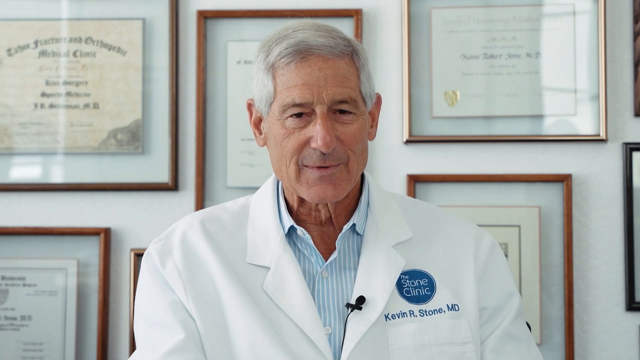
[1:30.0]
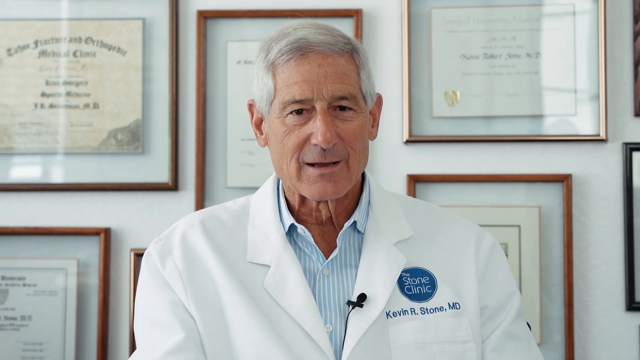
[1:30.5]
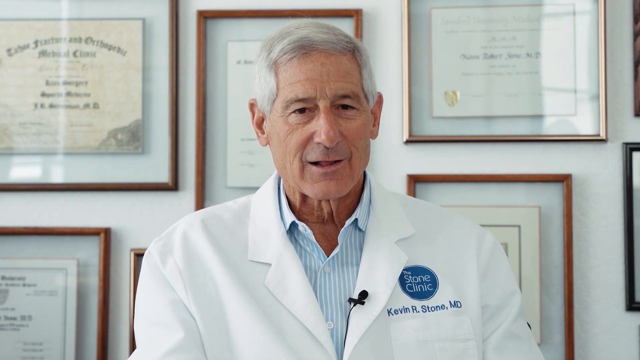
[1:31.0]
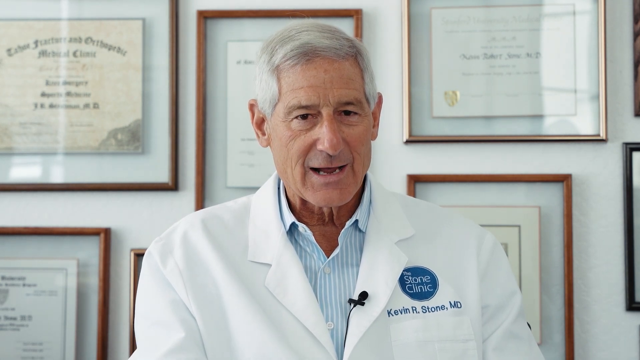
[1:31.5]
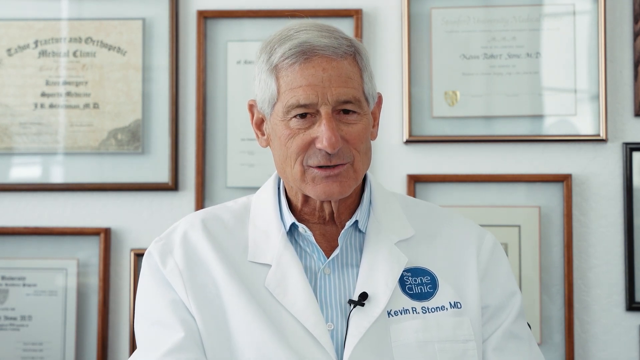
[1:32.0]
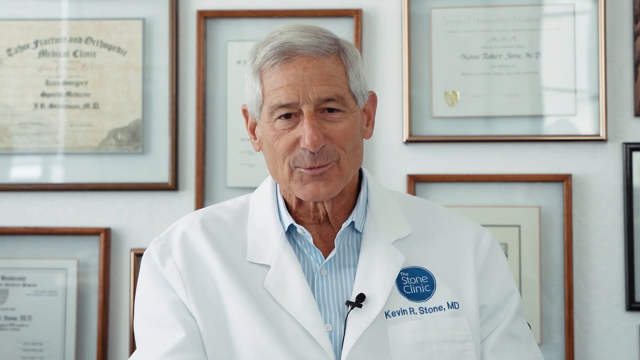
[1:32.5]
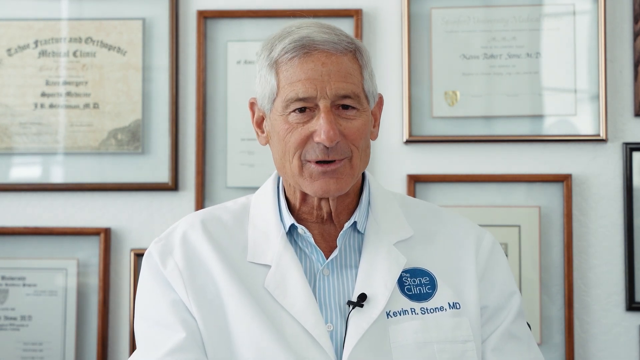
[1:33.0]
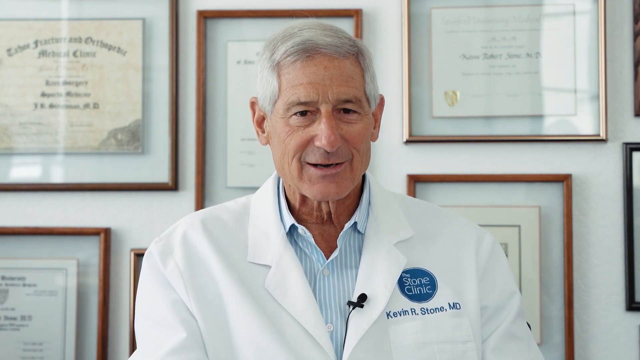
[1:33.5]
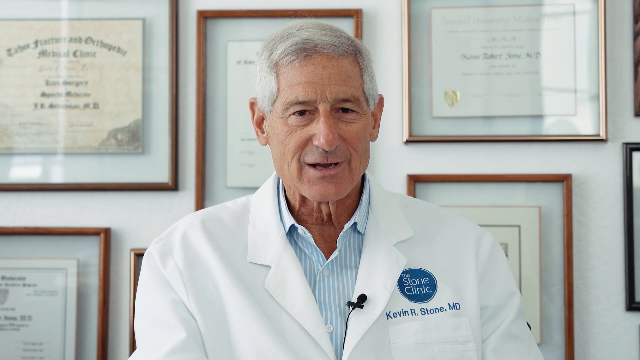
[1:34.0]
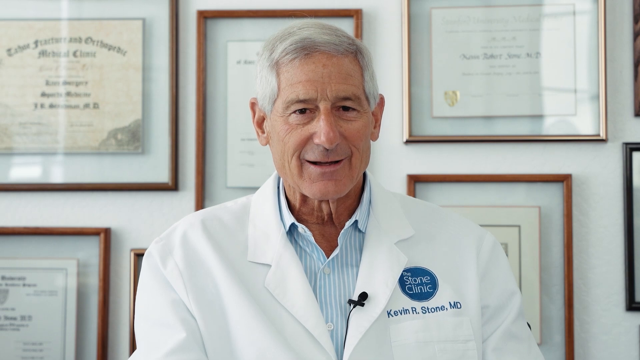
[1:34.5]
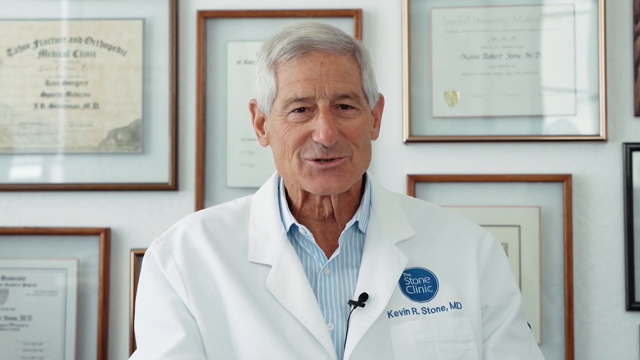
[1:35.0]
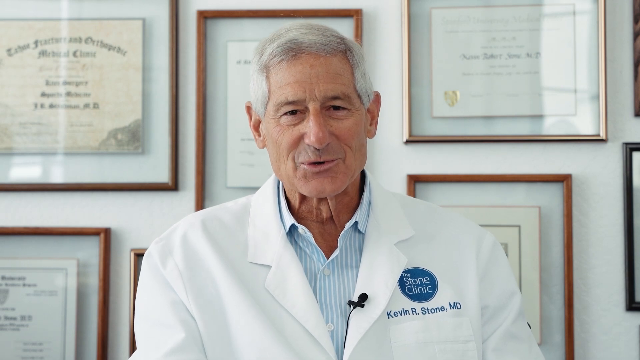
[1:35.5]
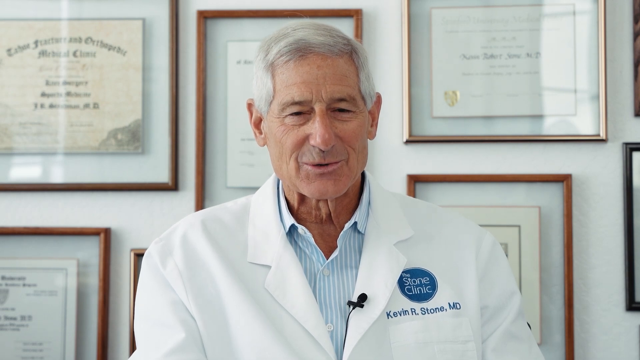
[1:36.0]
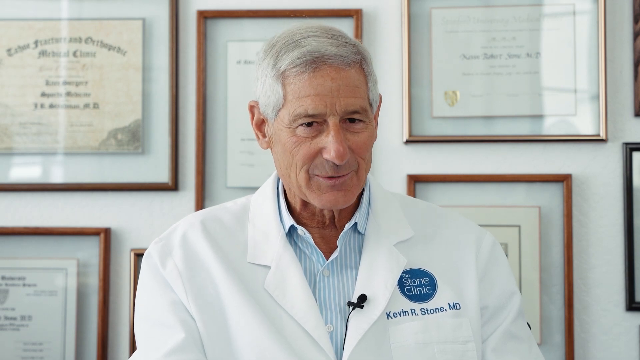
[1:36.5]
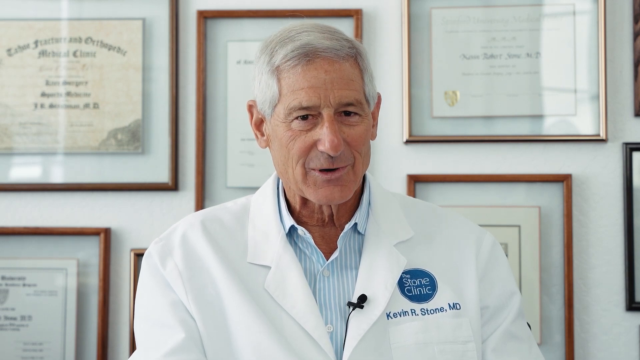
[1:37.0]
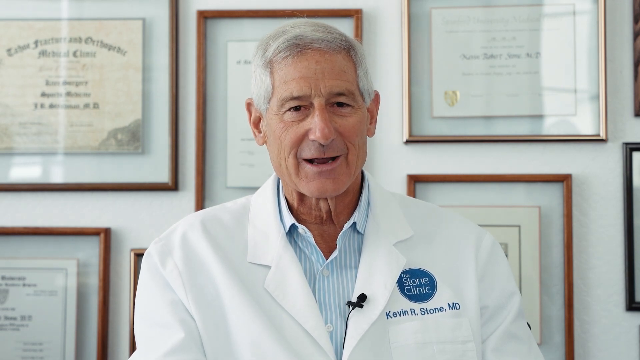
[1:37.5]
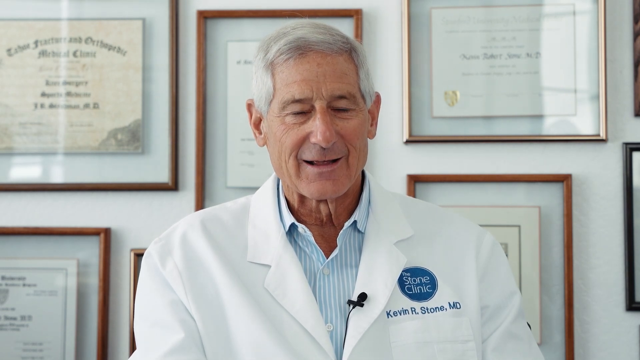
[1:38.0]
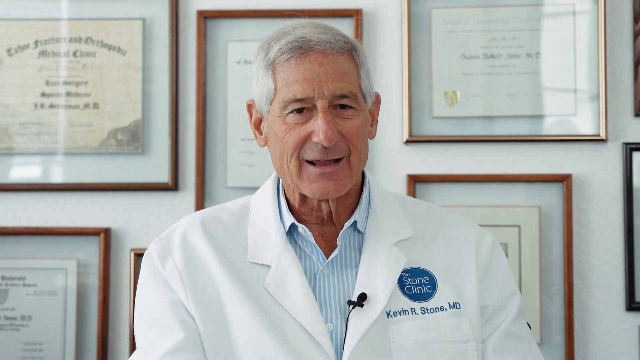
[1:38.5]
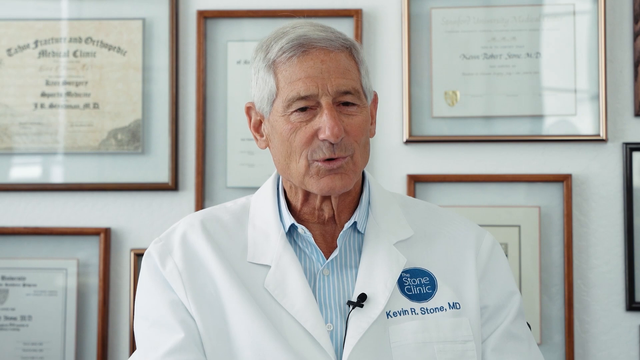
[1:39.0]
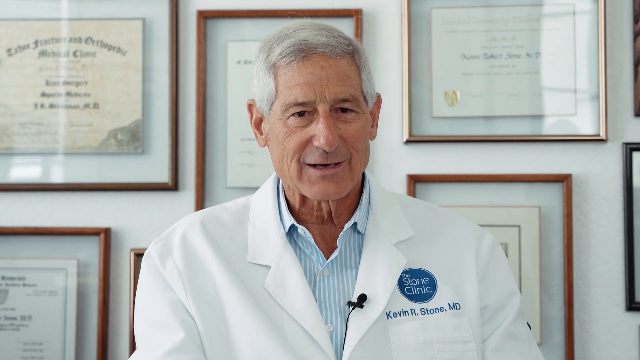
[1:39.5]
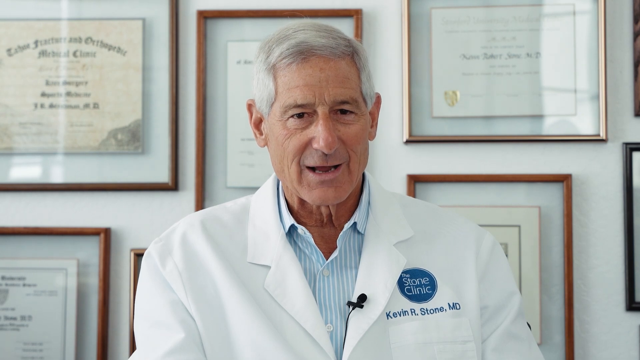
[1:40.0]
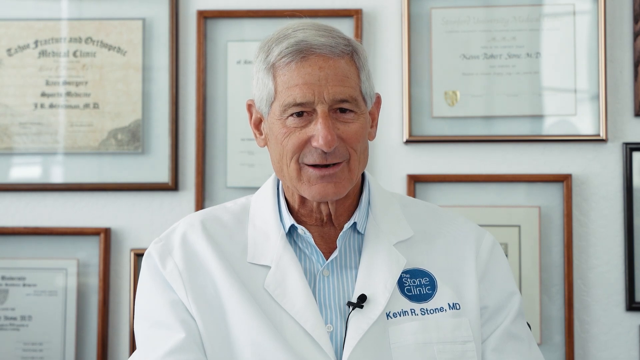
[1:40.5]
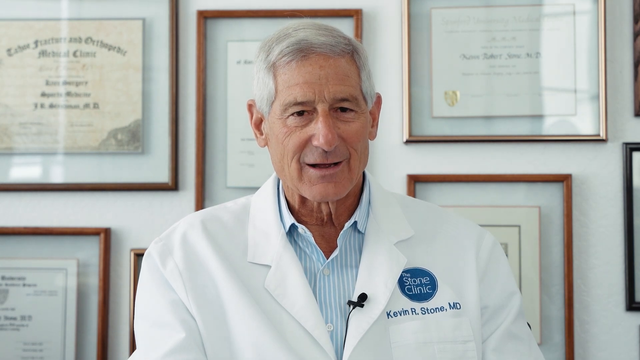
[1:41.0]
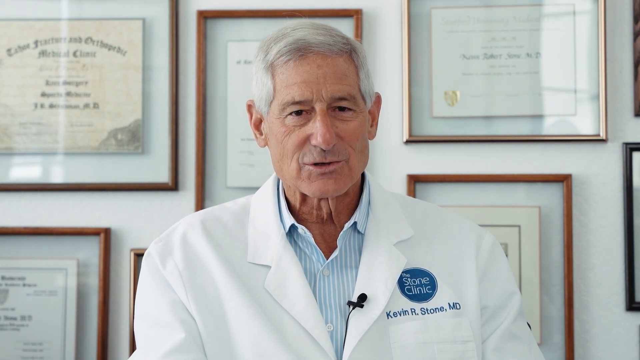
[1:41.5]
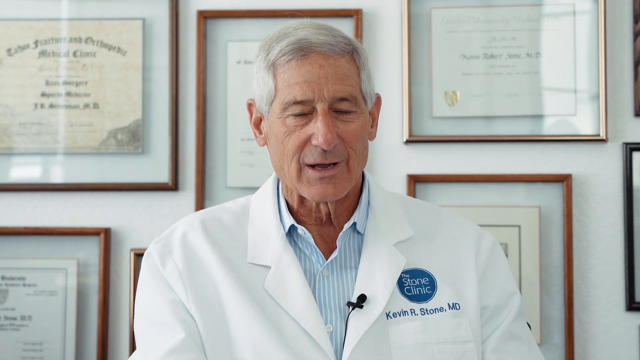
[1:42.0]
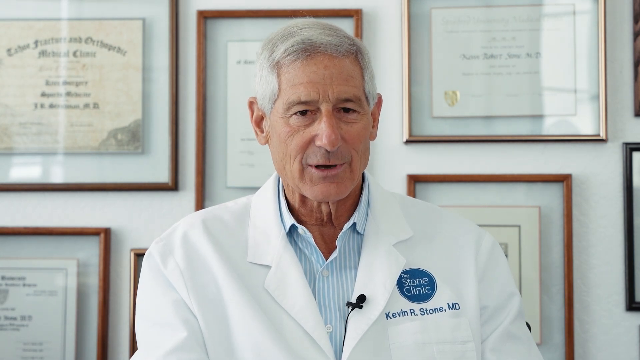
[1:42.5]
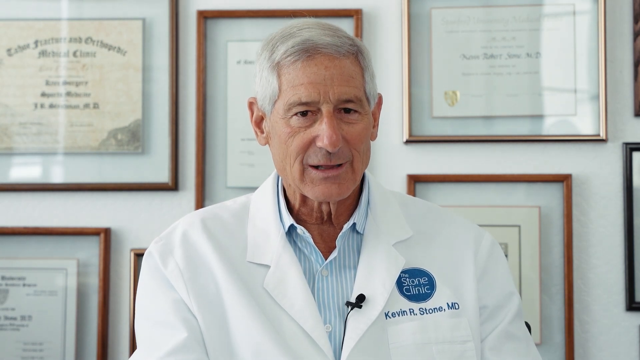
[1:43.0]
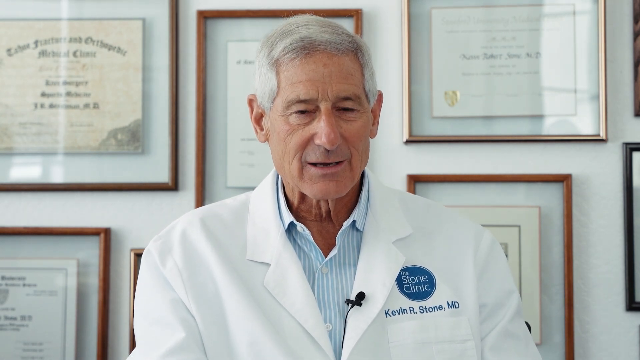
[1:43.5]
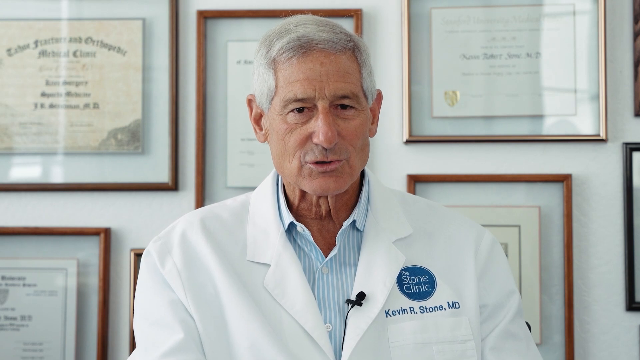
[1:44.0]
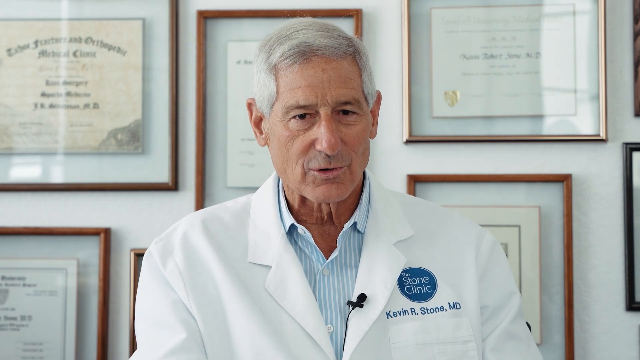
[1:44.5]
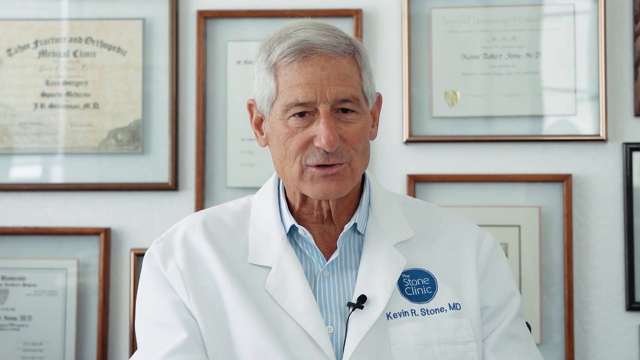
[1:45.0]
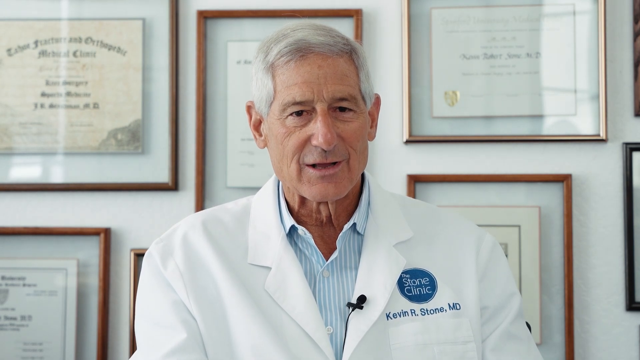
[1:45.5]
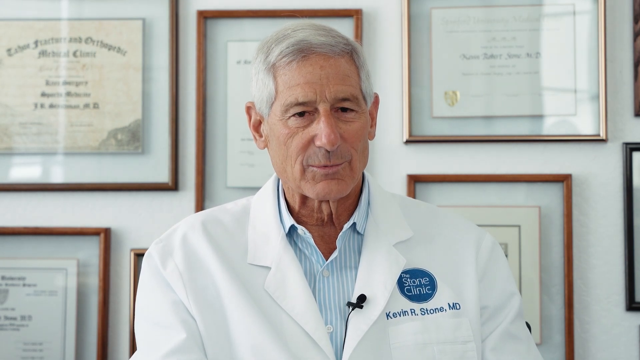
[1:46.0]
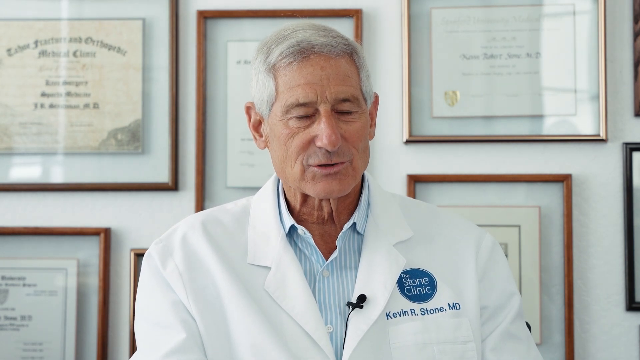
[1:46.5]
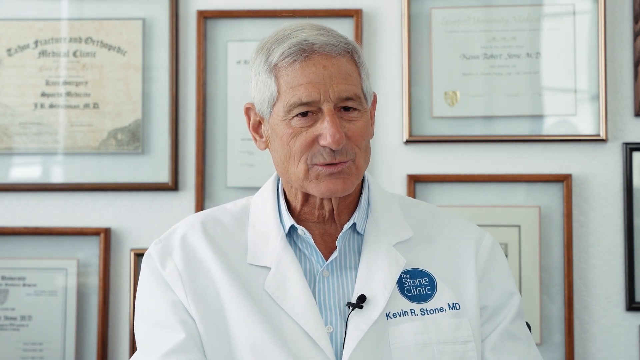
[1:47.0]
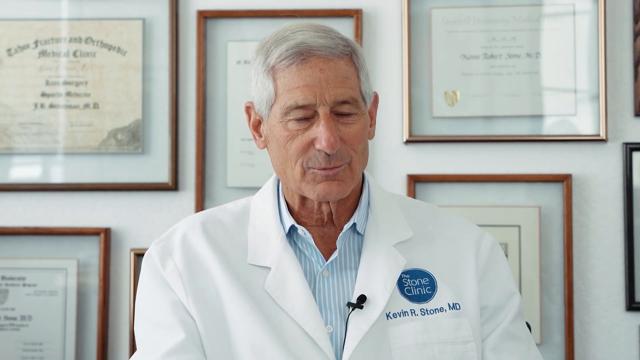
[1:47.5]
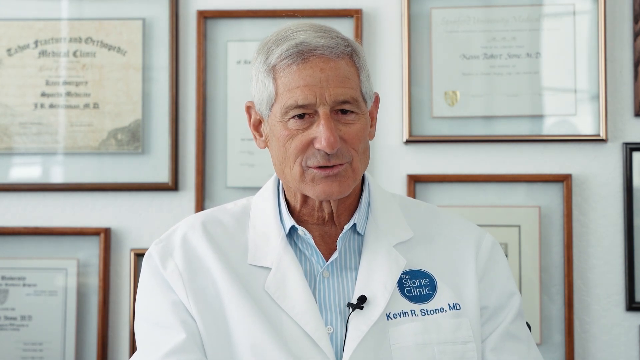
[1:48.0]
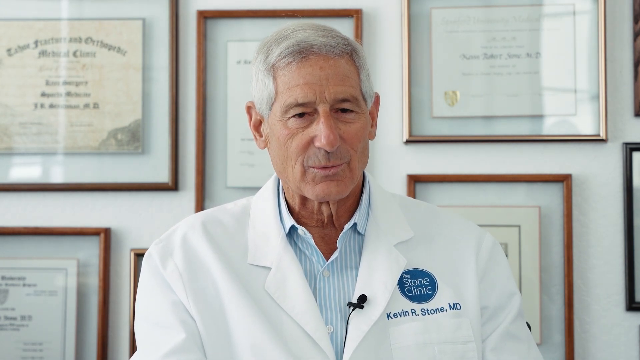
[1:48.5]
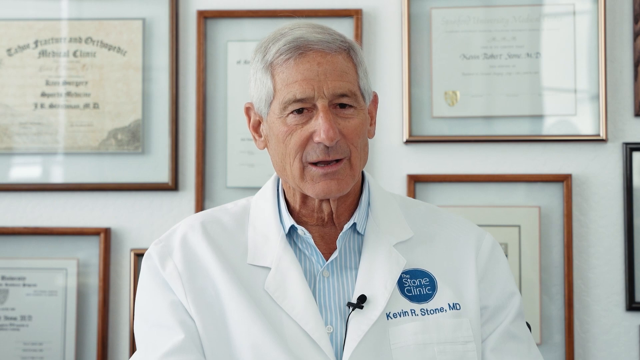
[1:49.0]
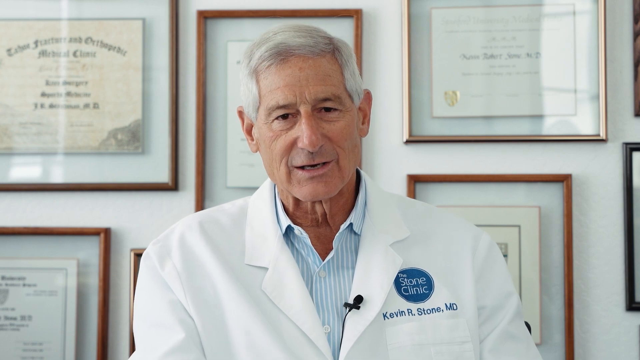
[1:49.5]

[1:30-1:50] Dr. Kevin R. Stone is interviewed in his office, speaking to the interviewer. He is a healthy-looking elderly man with grey hair and is clean shaven. He sits in front of a wall with his qualifications and diplomas hanging in frames: glass frames with wooden borders, two with gold borders and one with a black lacquered border. Seven or eight of them can be counted.